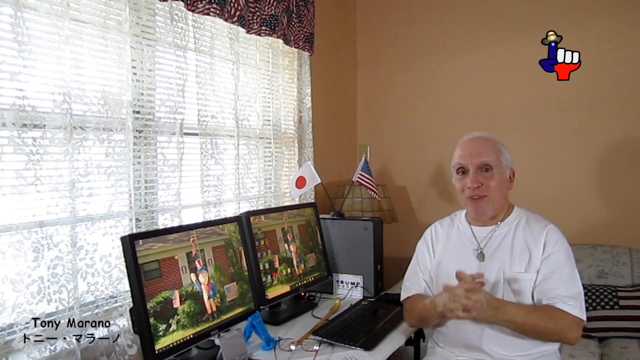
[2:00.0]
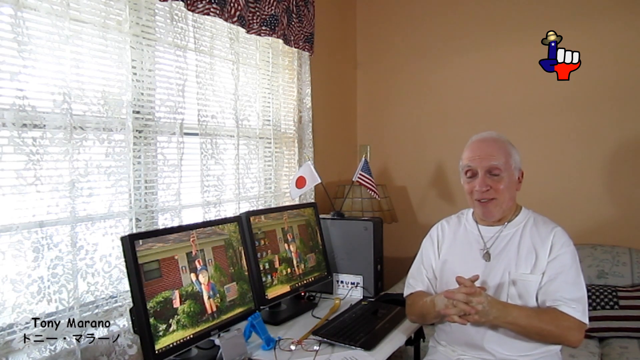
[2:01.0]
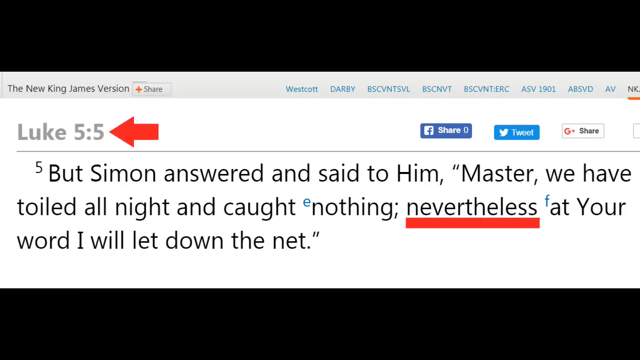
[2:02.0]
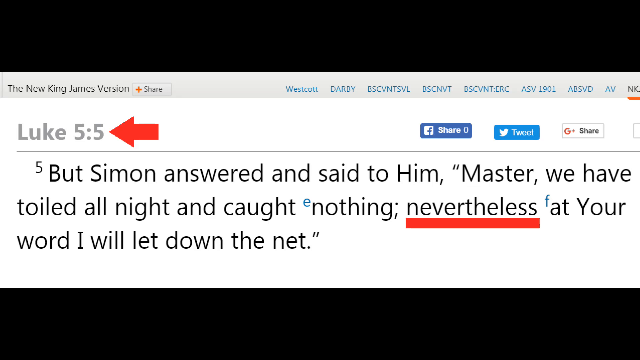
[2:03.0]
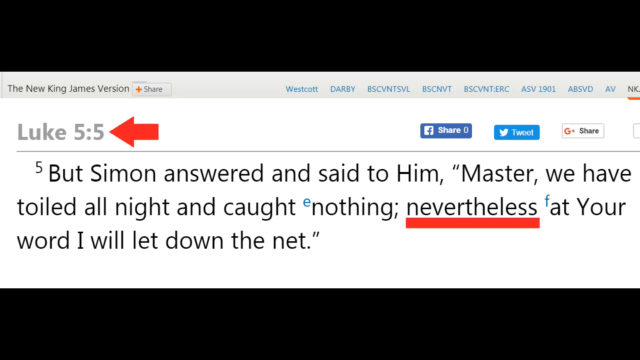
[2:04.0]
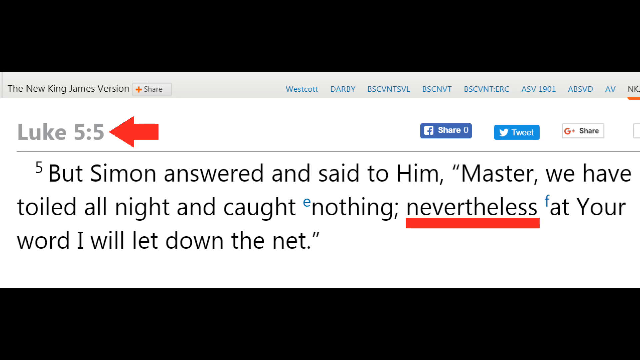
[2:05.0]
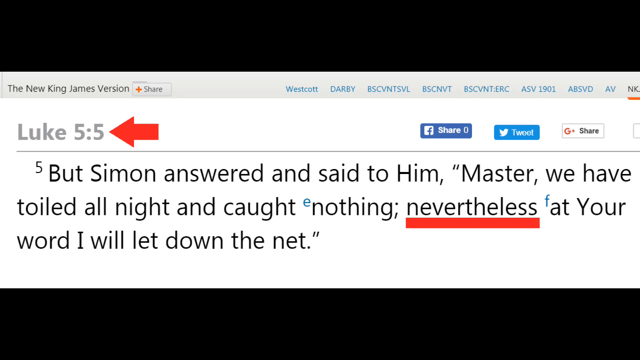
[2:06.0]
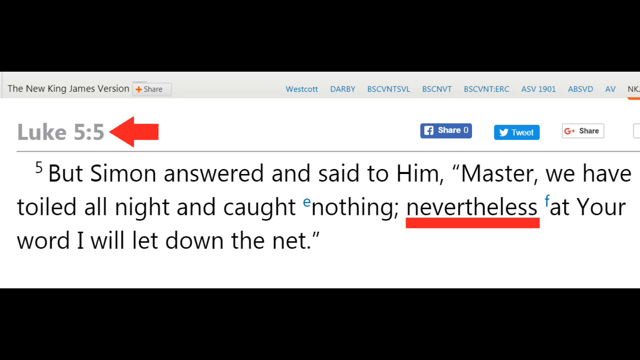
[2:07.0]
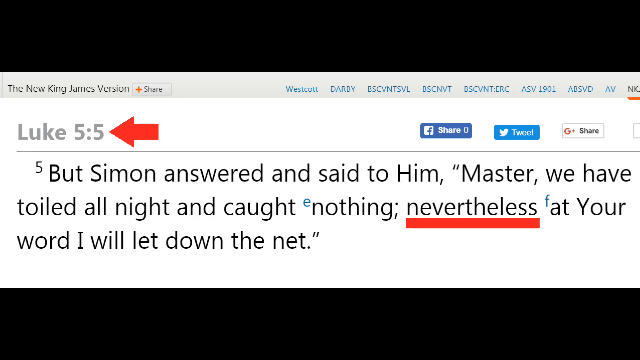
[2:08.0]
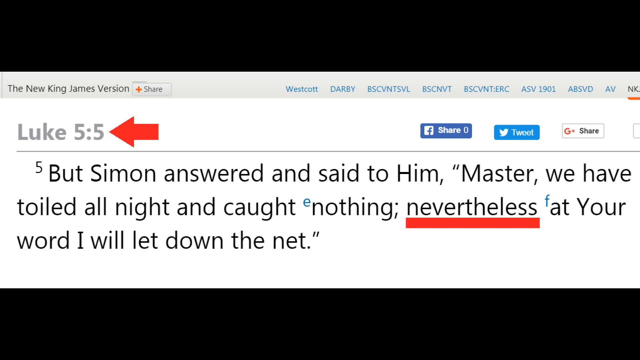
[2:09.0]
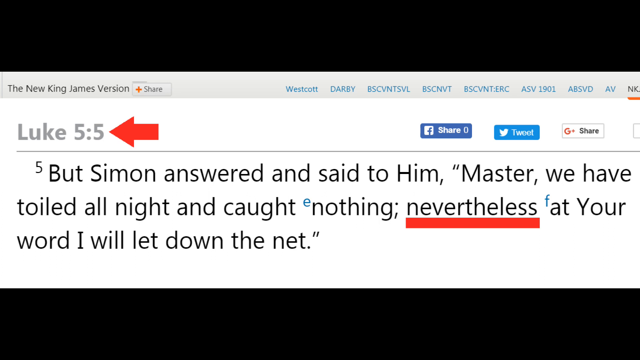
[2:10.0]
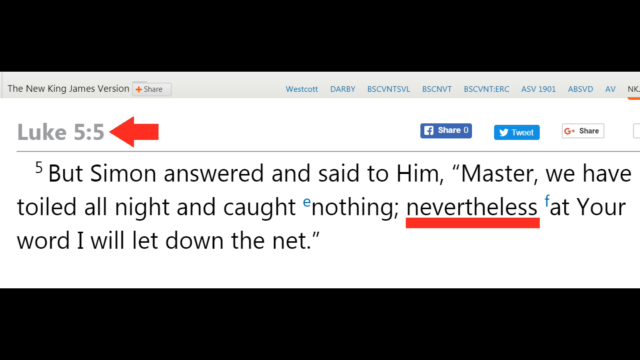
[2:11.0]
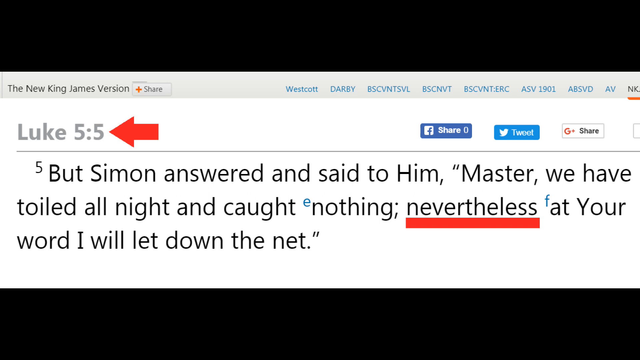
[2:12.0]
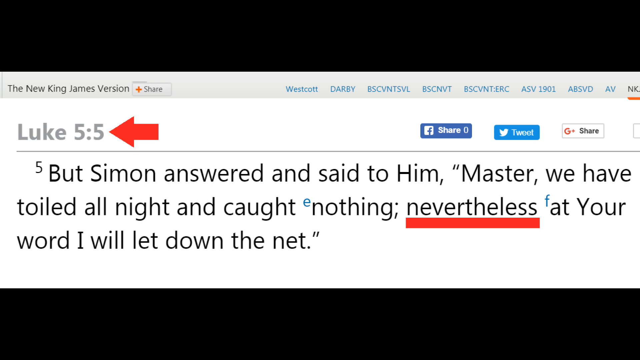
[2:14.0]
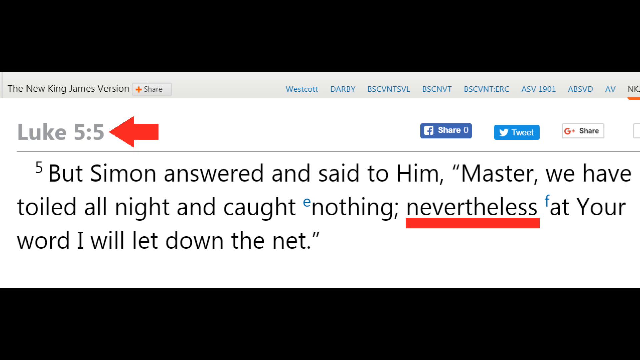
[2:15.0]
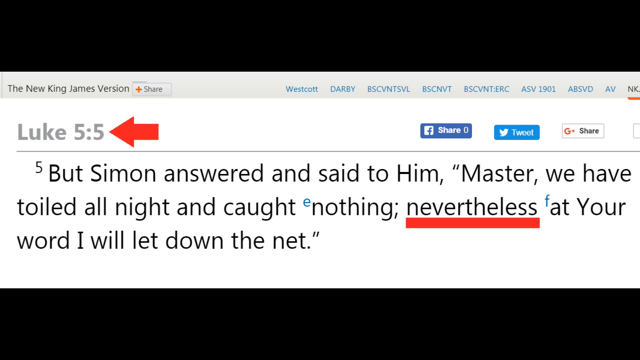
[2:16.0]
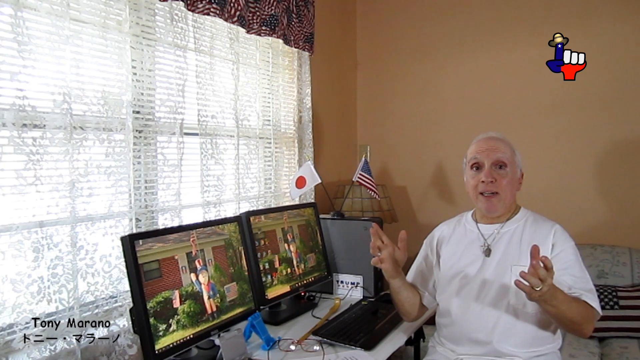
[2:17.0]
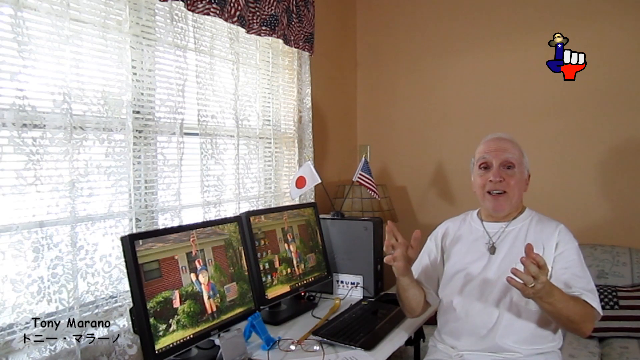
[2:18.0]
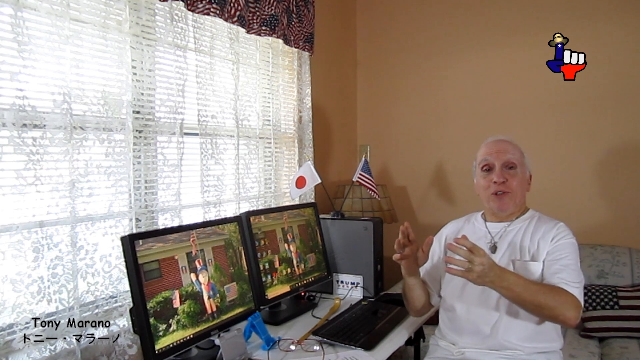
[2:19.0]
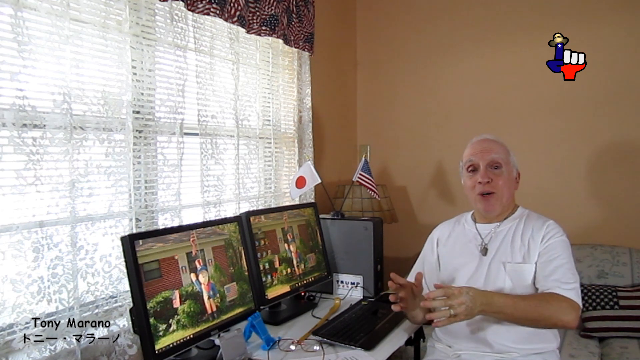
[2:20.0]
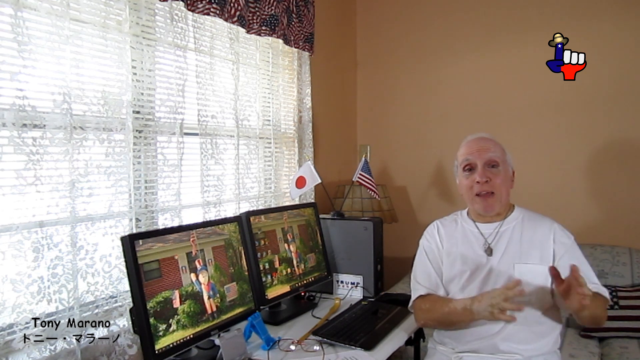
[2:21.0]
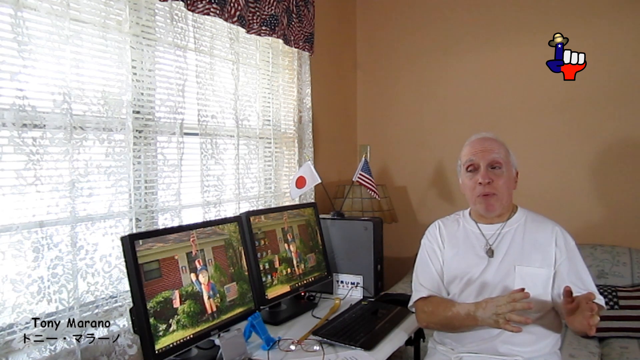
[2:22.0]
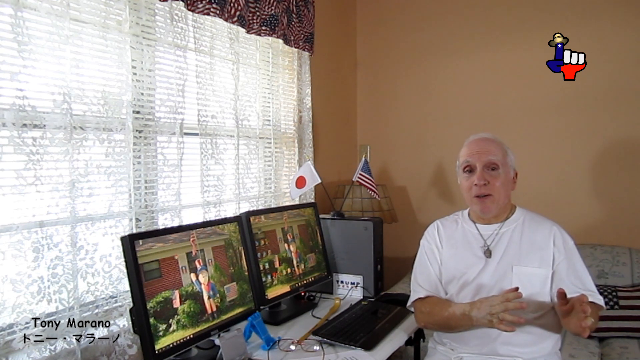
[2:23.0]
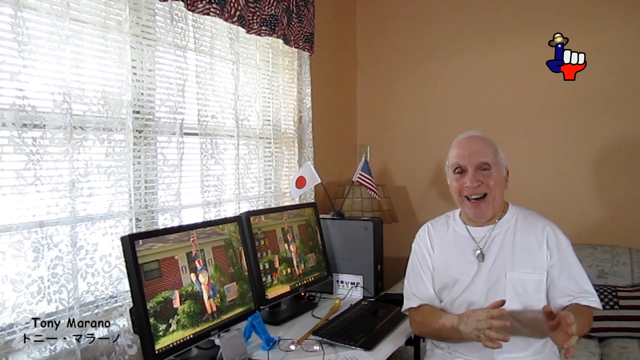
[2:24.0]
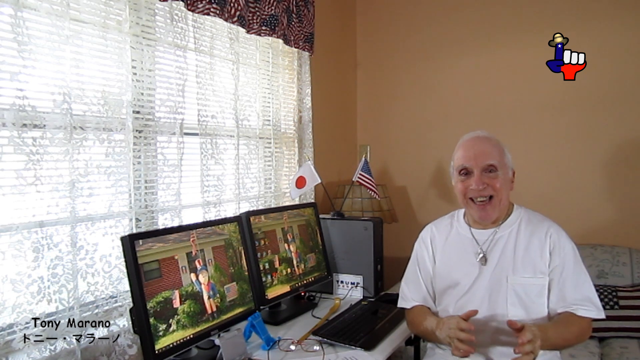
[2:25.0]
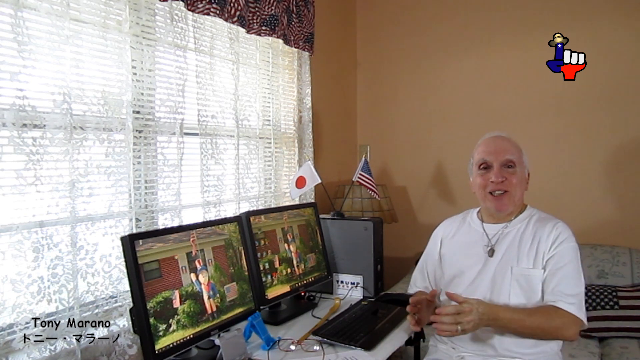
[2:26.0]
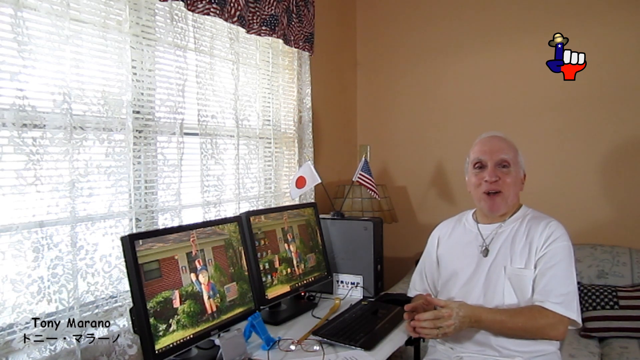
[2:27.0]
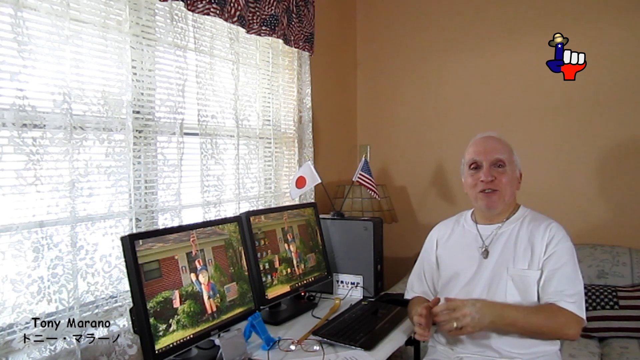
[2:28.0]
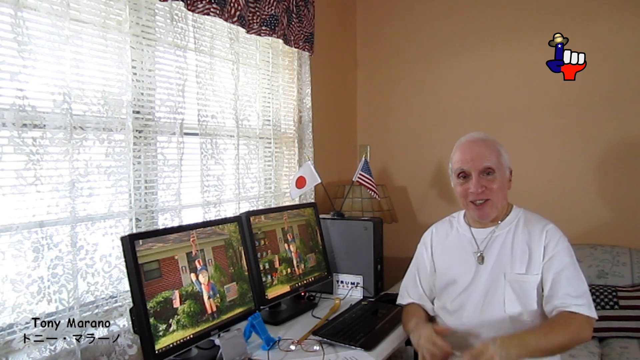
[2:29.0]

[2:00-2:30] The screen is white. In the top left-hand corner it reads "Luke 5 5," with a red arrow pointing to the second five. Underneath, it reads "But Simon answered and said to him master we have toiled all night and caught nothing nevertheless at your word I will let down the net," with the word "nevertheless" underlined in red. The video then cuts to a man sitting on the right side of the screen, speaking directly to the camera. He has short white hair and wears a short-sleeved white shirt and a necklace with a charm. To his right is a white desk with two desktop monitors side by side and a keyboard in front of one of them. To the right of that is the desktop tower with two small flags on top, an American flag and a China flag. Behind the desk is a large window with a see-through white curtain over it, and a blind runs from the top of the window all the way to the bottom.